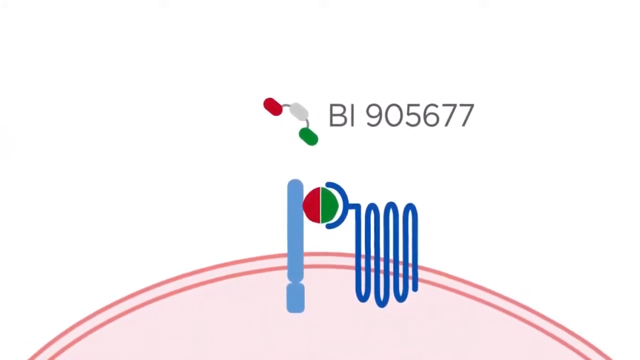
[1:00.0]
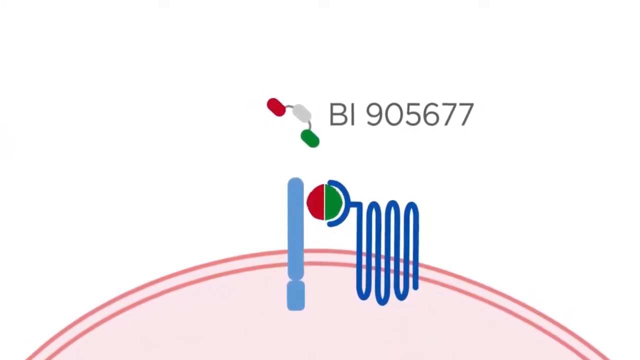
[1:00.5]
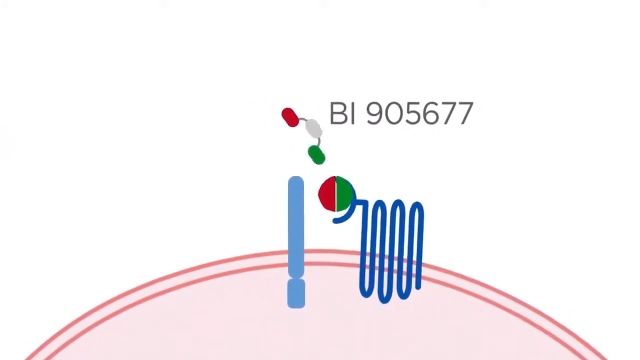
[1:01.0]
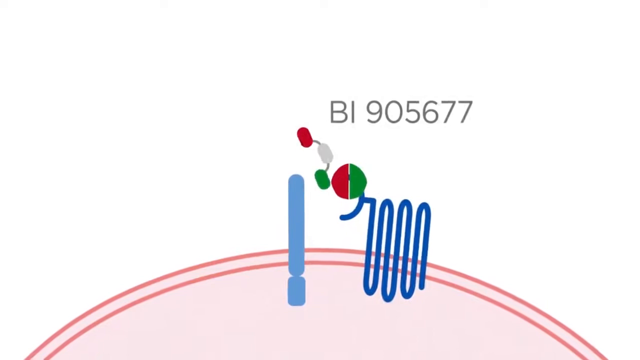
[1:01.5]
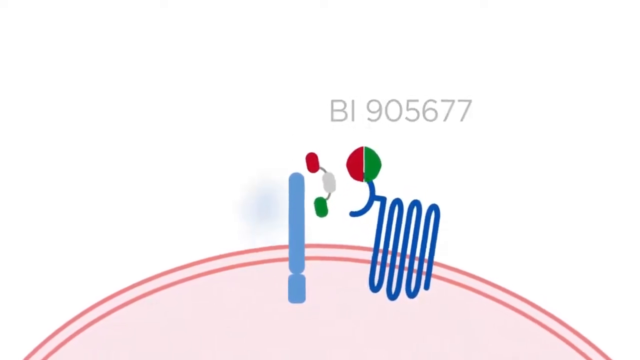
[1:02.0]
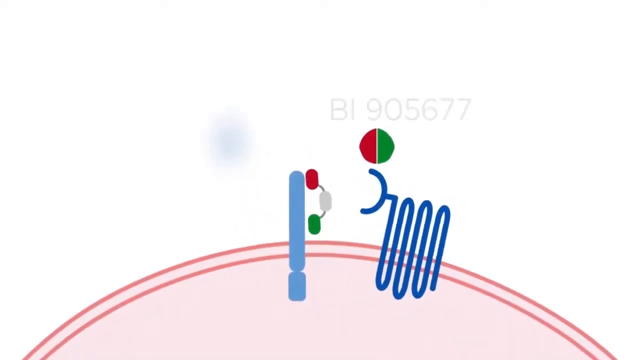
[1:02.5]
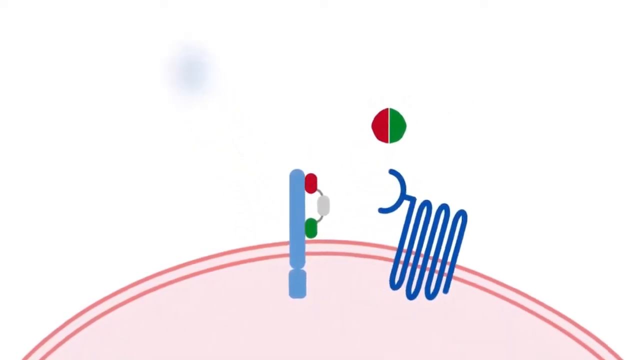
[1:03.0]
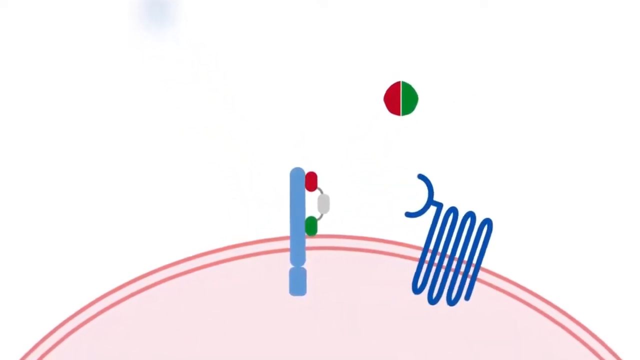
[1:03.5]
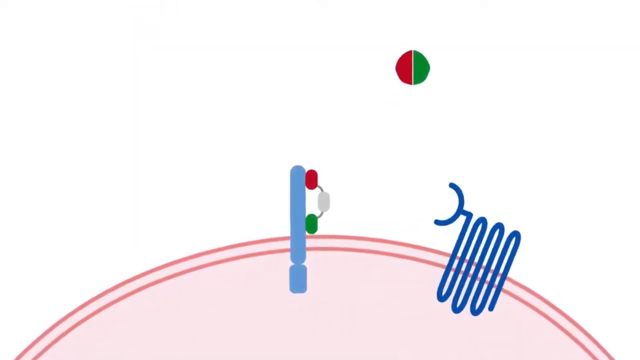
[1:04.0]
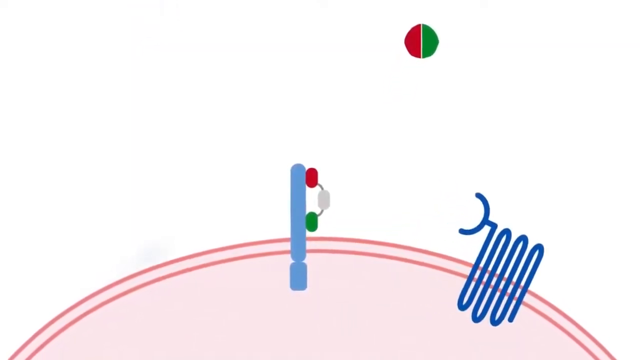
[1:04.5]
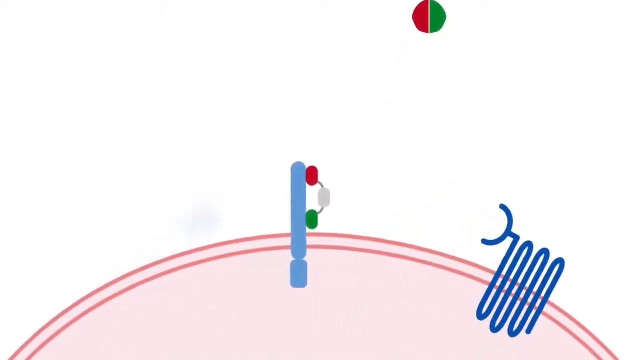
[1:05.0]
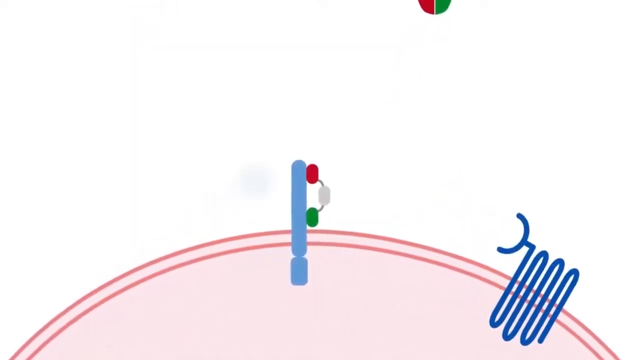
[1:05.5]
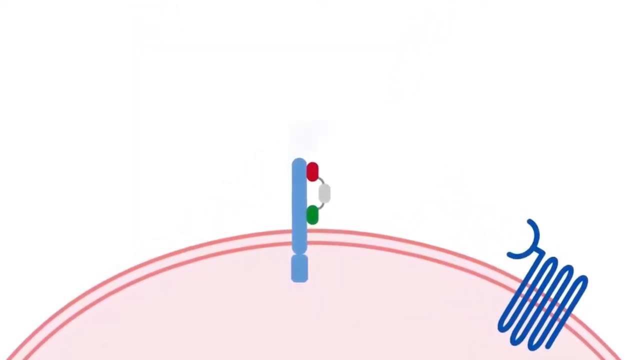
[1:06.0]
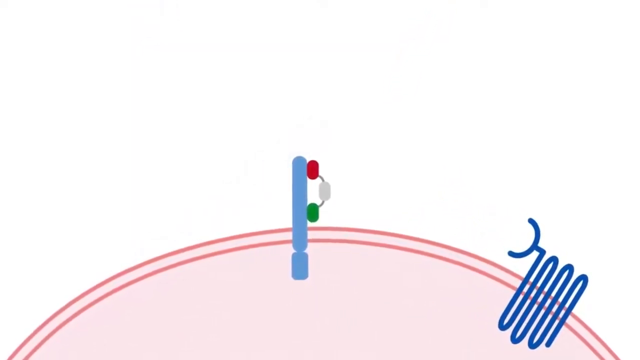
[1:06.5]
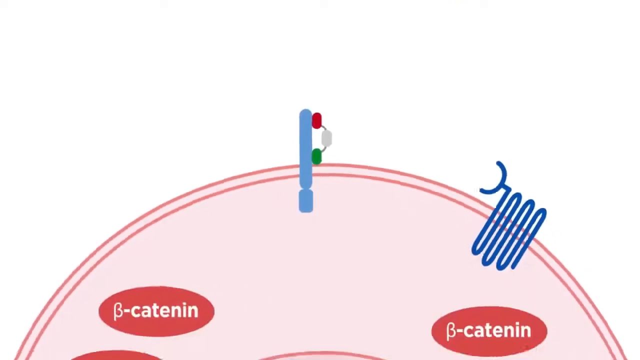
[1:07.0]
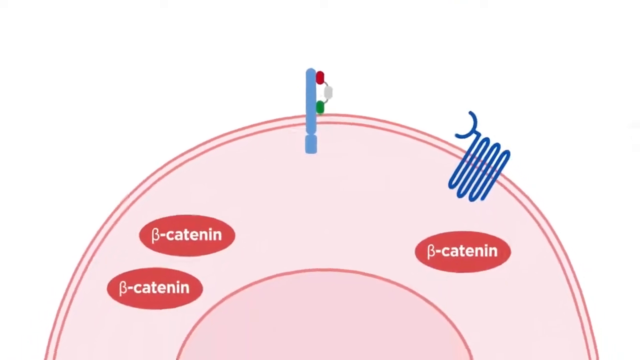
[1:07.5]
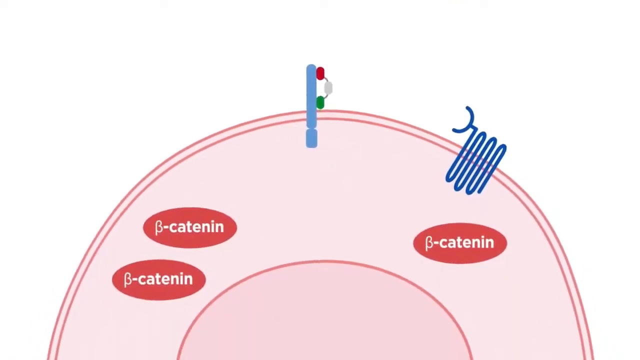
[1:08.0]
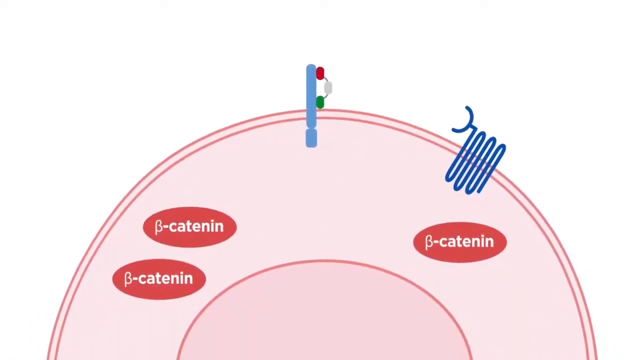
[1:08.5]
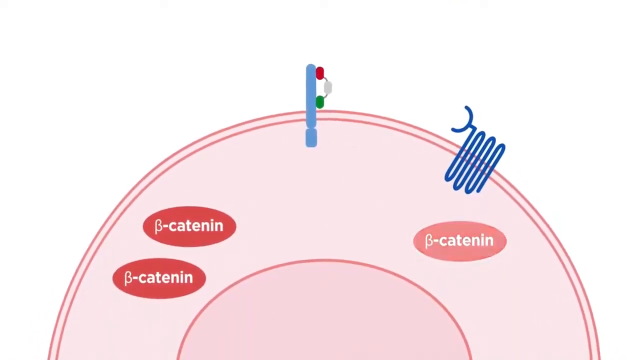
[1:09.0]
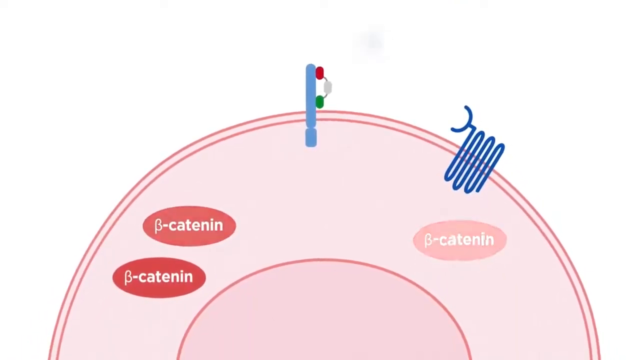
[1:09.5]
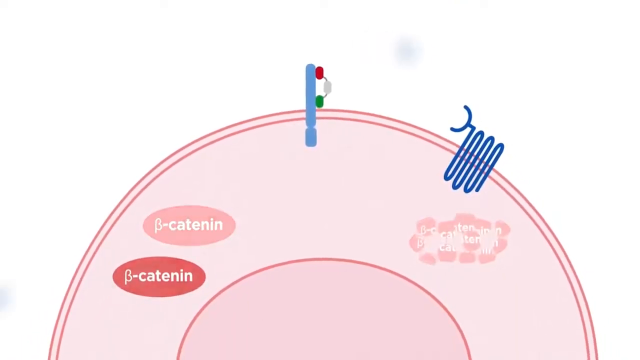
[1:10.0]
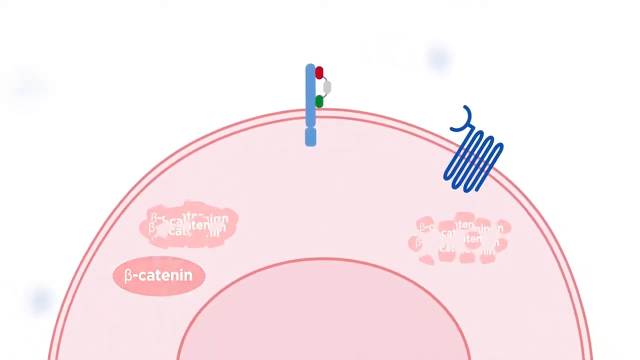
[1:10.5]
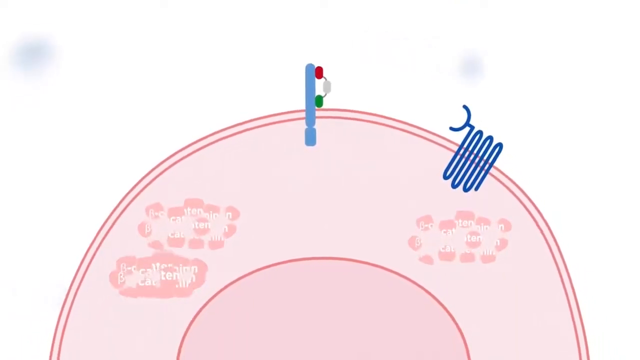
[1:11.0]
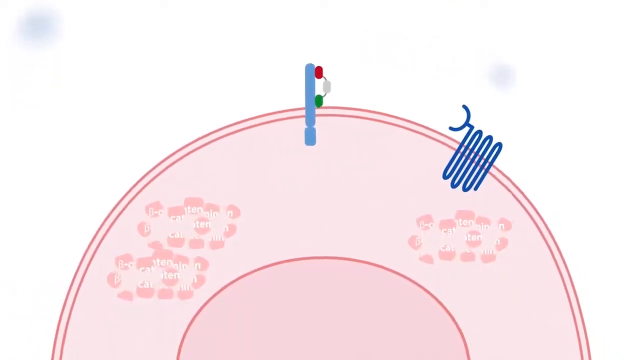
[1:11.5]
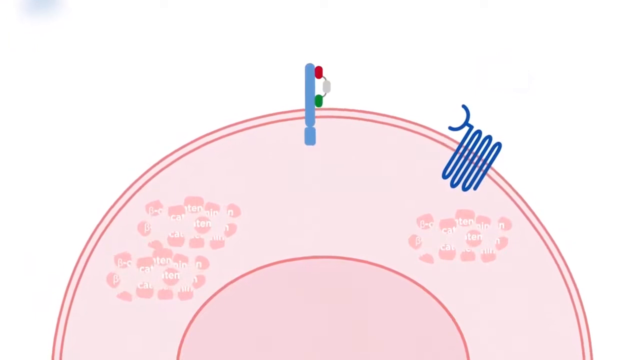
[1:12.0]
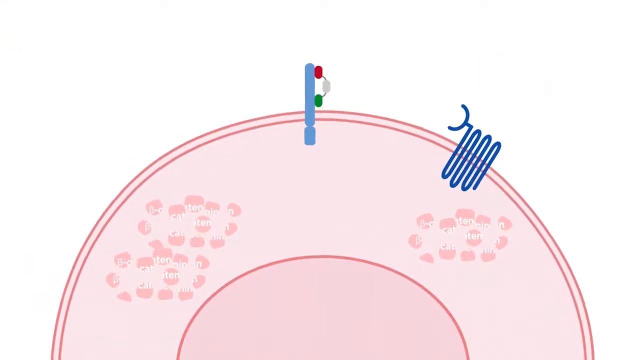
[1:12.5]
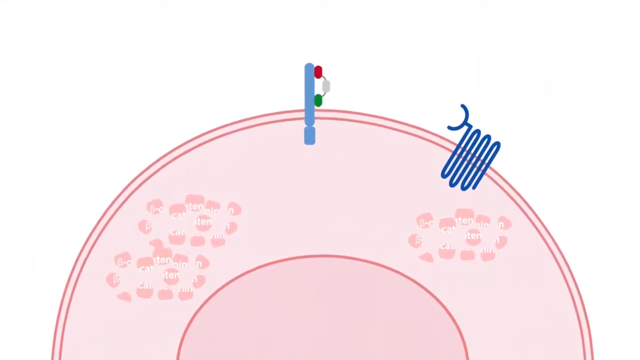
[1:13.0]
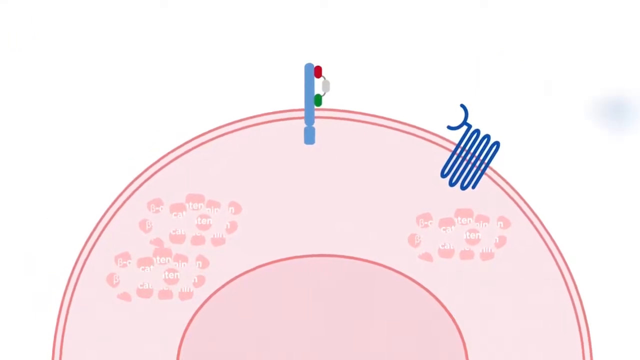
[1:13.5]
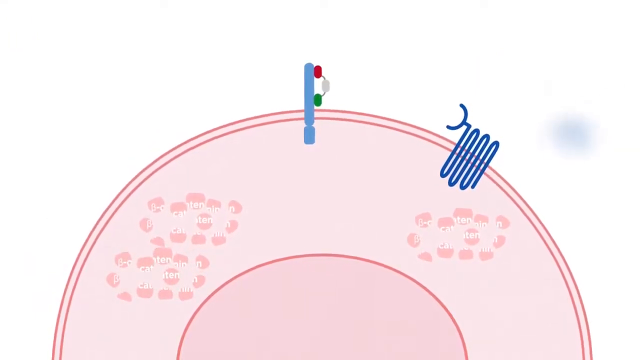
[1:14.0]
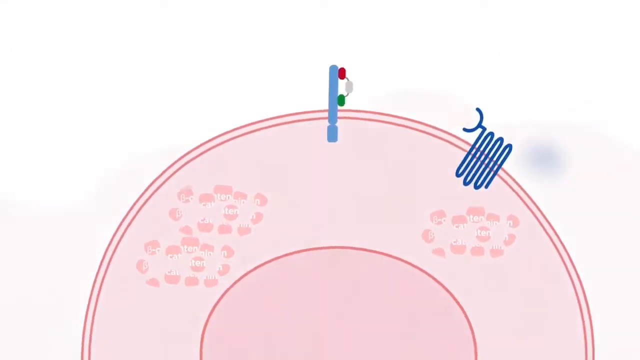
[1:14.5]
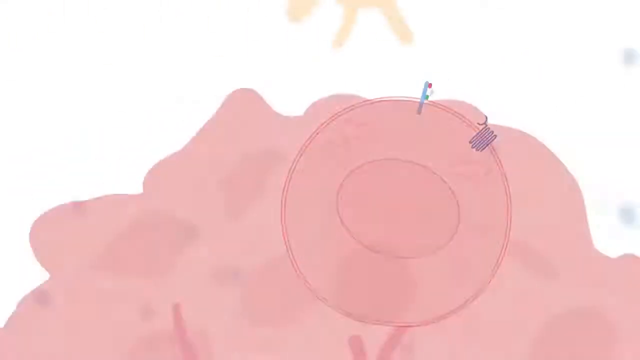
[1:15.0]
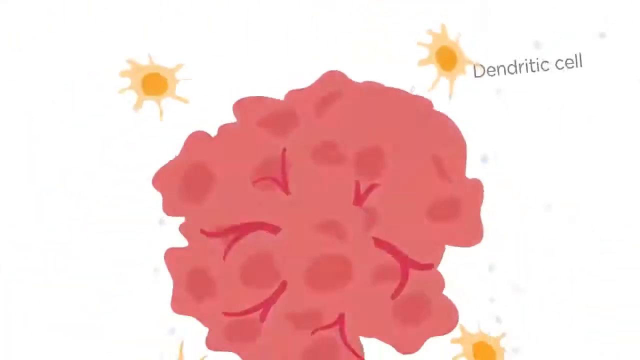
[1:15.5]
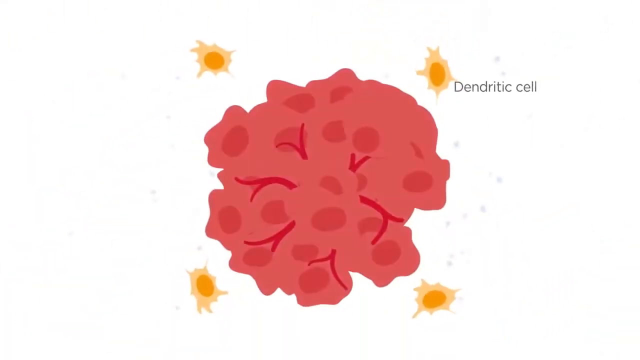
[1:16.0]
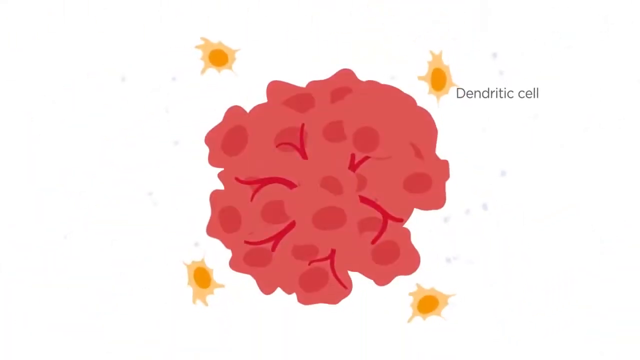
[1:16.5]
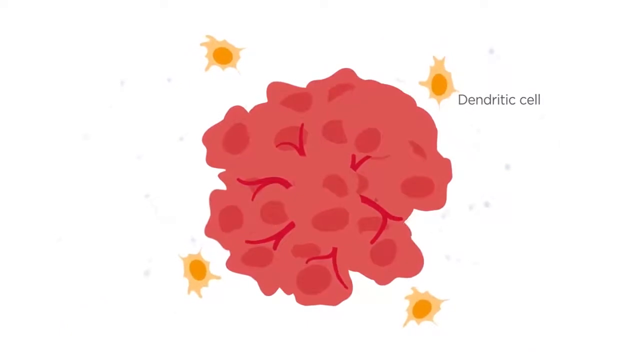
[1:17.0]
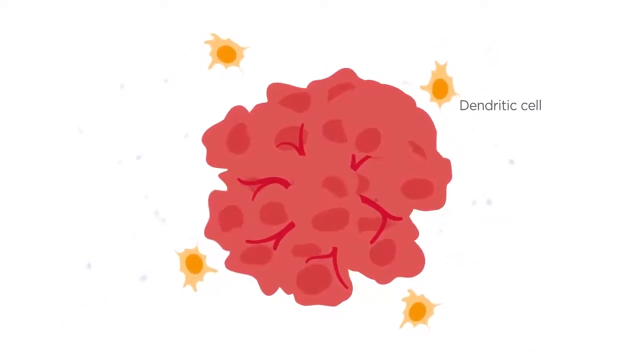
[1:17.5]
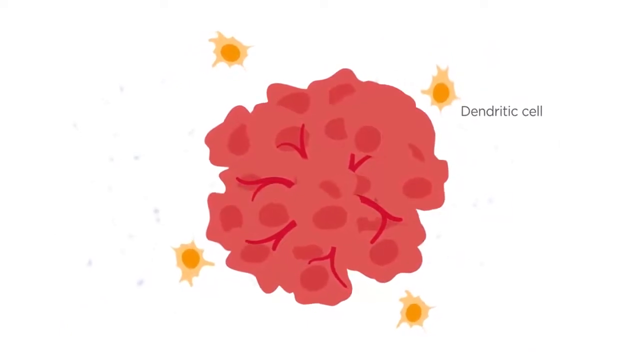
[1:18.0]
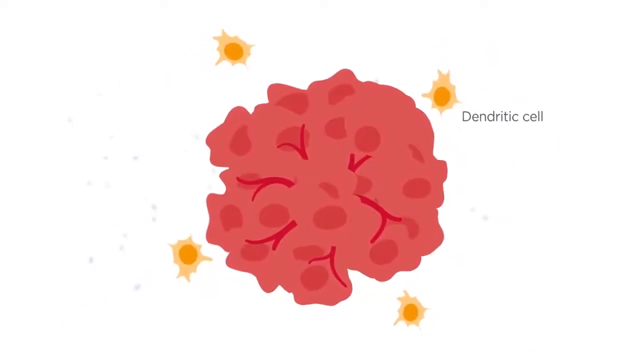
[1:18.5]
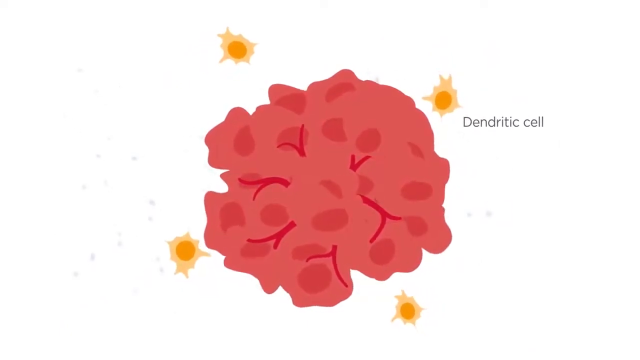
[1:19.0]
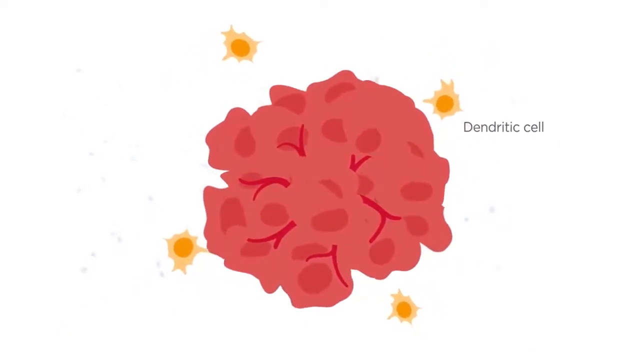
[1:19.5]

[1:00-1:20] The BI905677 graphic starts to fall into place where the circular red and green graphic was and looks to be binding to the bluish-gray vertical cylindrical object. As it binds, the blue squiggly line starts to fall away toward the right side, and the image zooms out toward the cell with the B-catenin compounds inside it. The B-catenin compounds start to dissipate and kind of animate, breaking up, apparently showing that the medicine is working. The video then zooms out to the outside of the cell, in animated form, with the words "dendritic cell" in dark gray lettering in the top right portion of the screen and four yellow-orange splotches on the outside of the cell. The splotches are shaped kind of like a gunshot shape. The cell starts to kind of move around and expand.